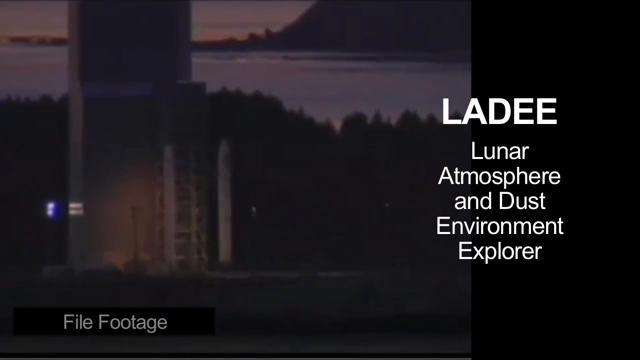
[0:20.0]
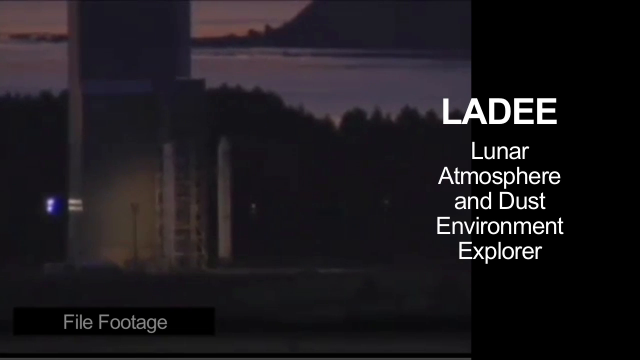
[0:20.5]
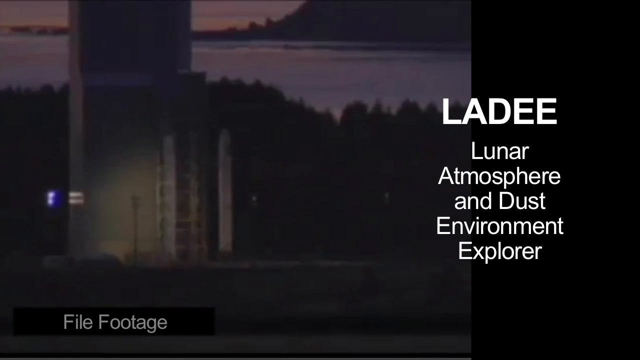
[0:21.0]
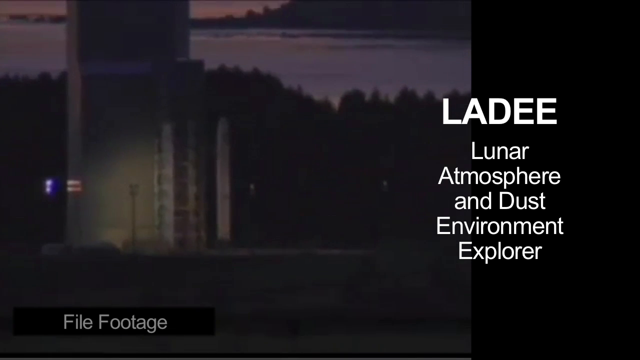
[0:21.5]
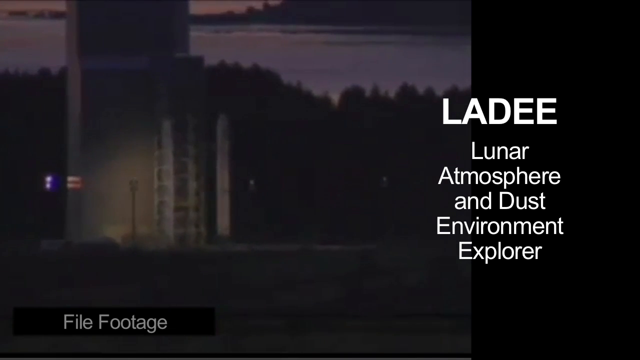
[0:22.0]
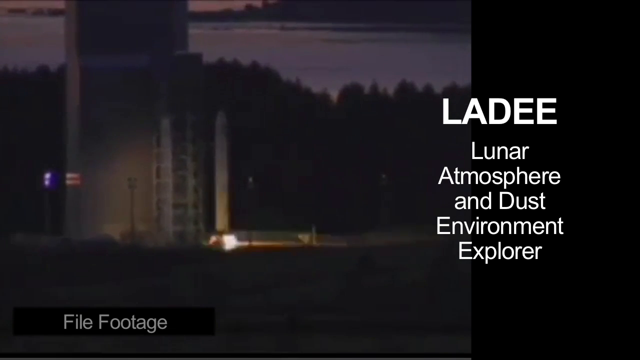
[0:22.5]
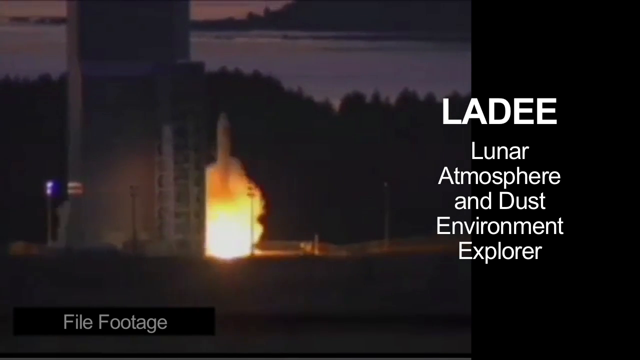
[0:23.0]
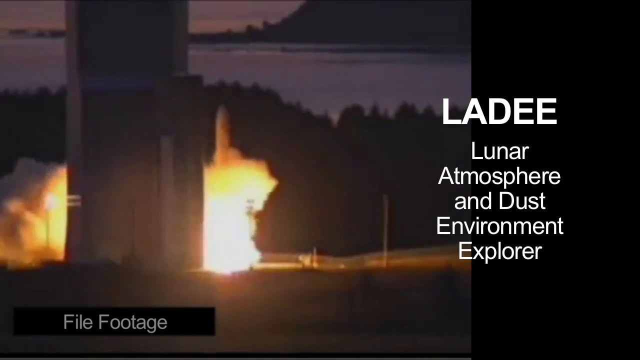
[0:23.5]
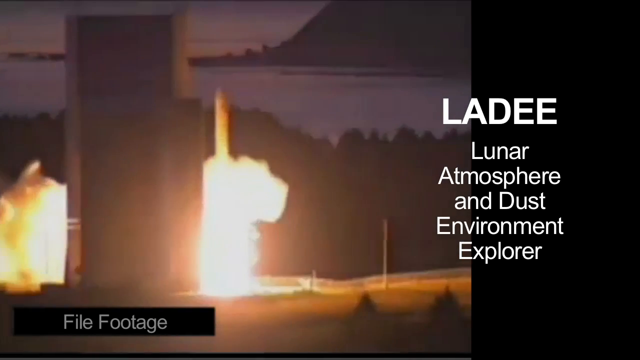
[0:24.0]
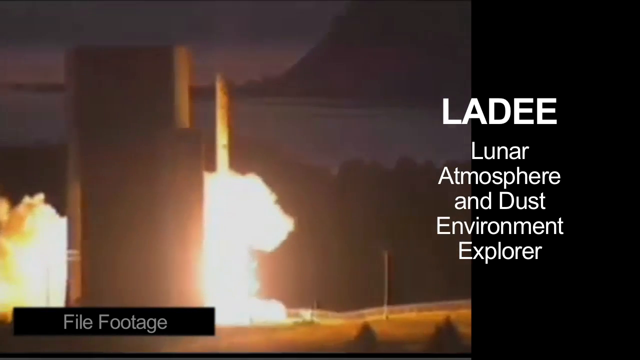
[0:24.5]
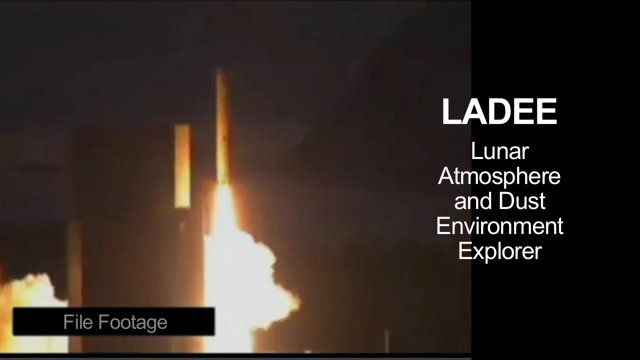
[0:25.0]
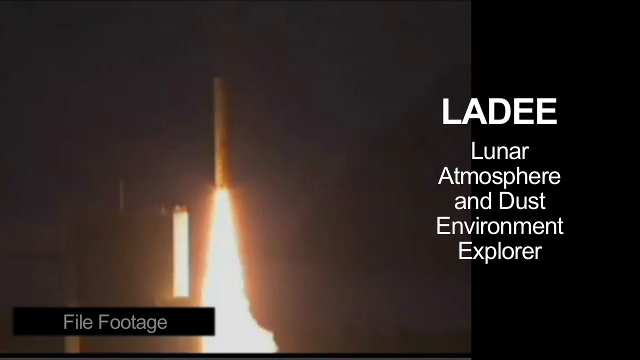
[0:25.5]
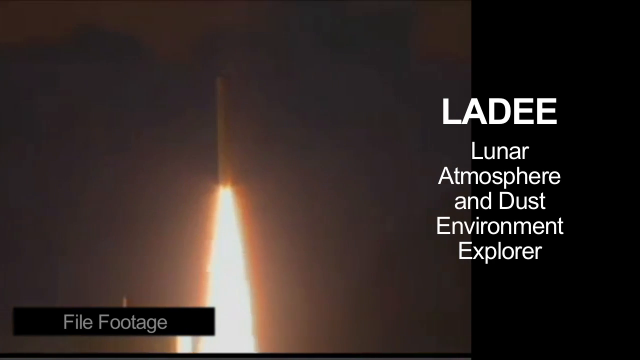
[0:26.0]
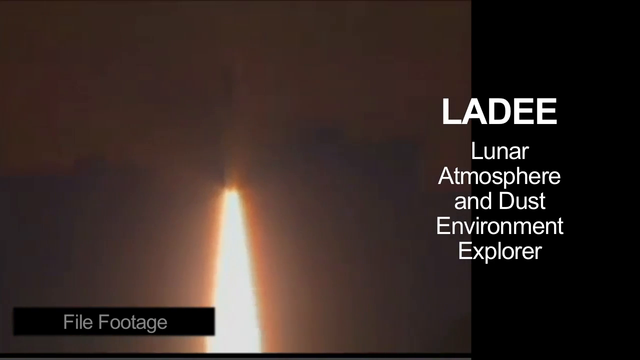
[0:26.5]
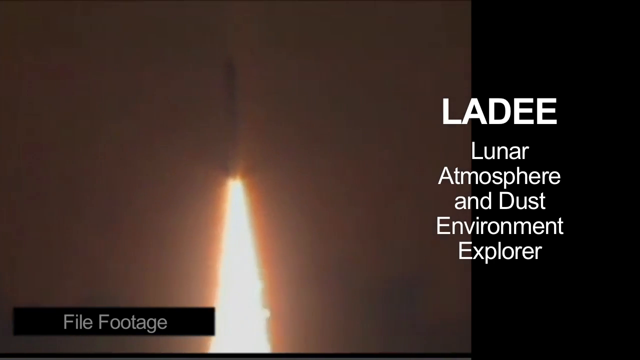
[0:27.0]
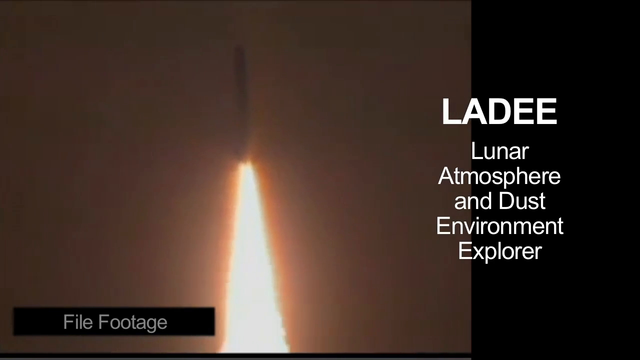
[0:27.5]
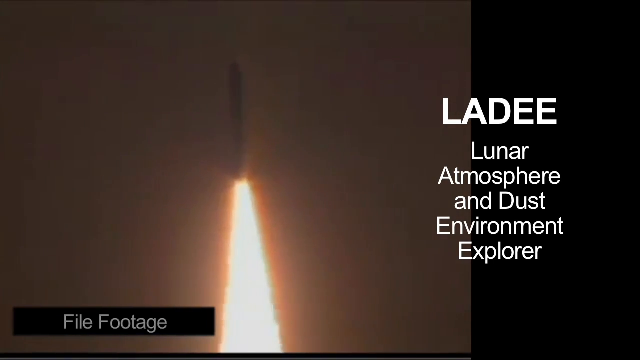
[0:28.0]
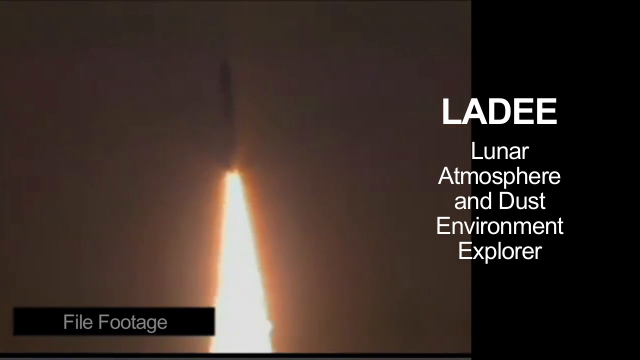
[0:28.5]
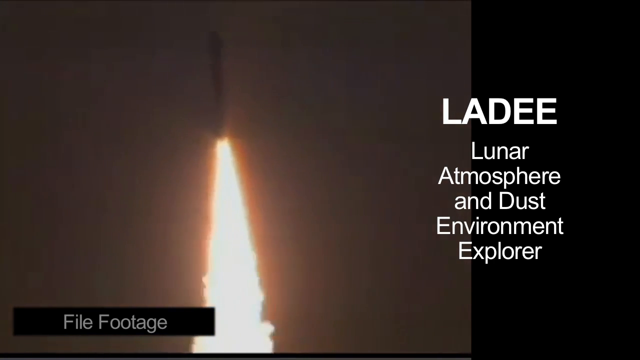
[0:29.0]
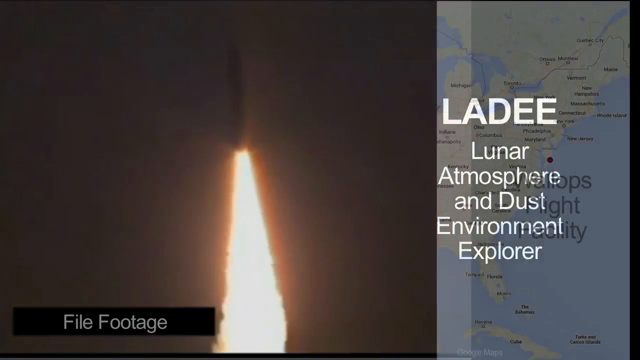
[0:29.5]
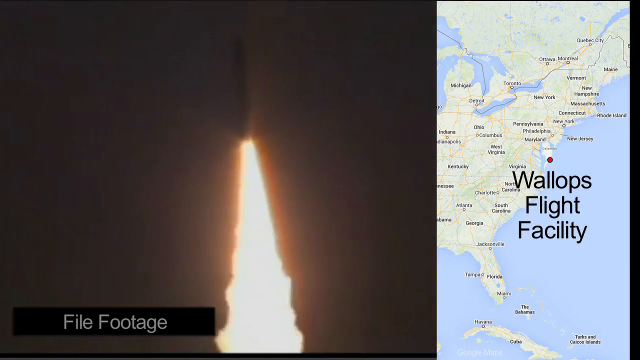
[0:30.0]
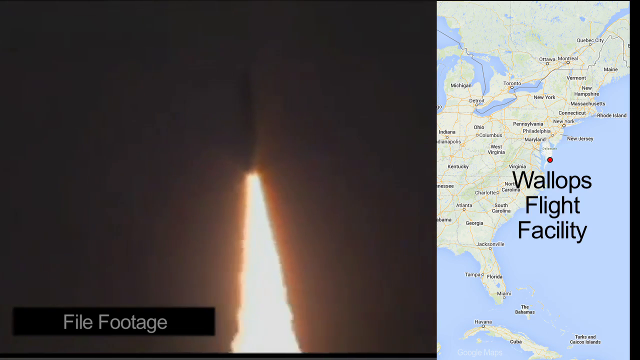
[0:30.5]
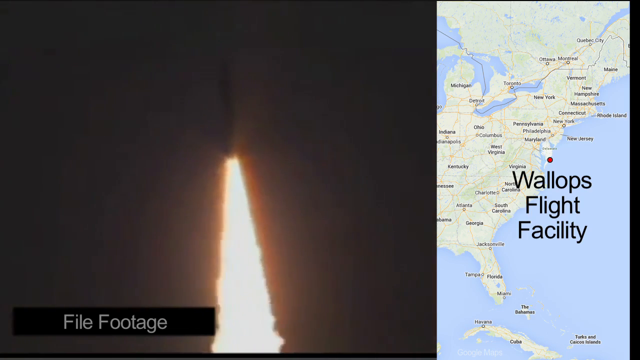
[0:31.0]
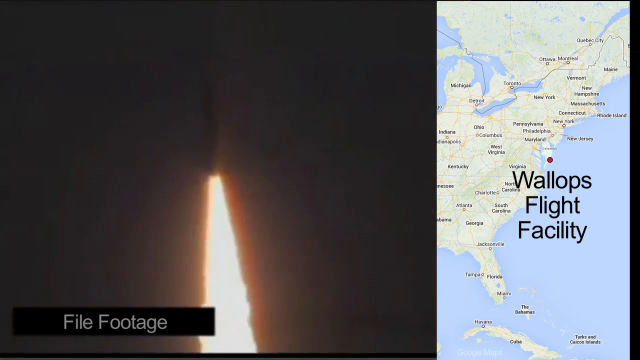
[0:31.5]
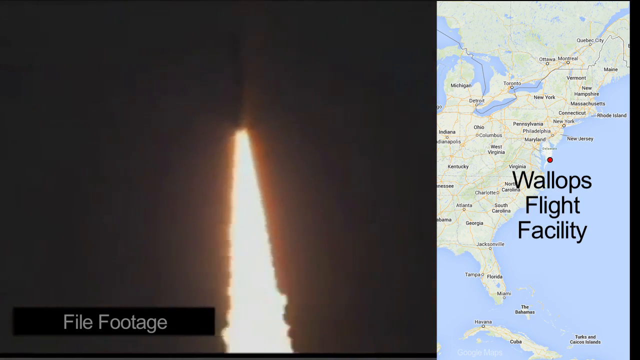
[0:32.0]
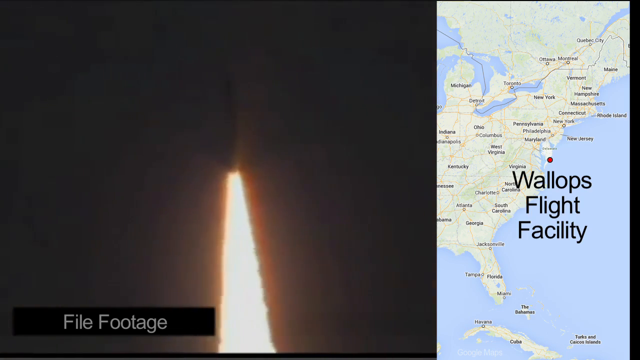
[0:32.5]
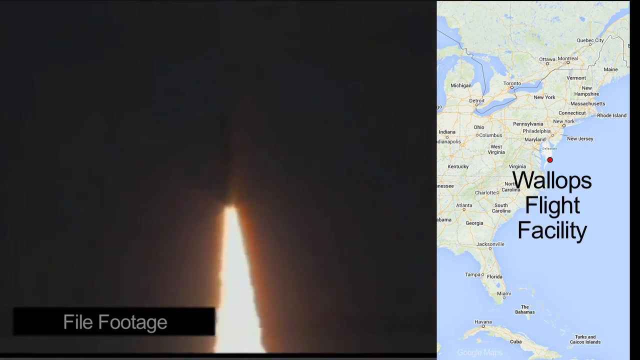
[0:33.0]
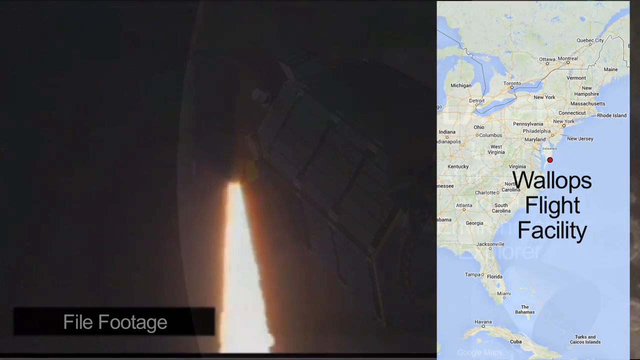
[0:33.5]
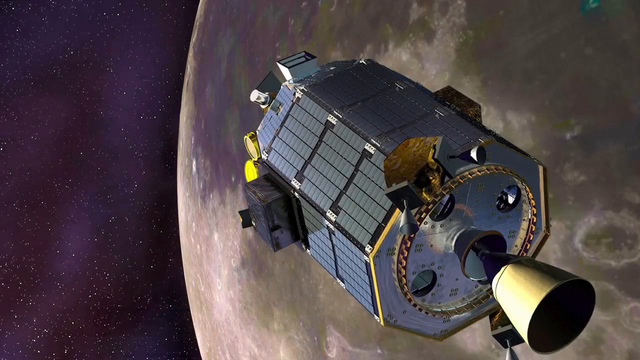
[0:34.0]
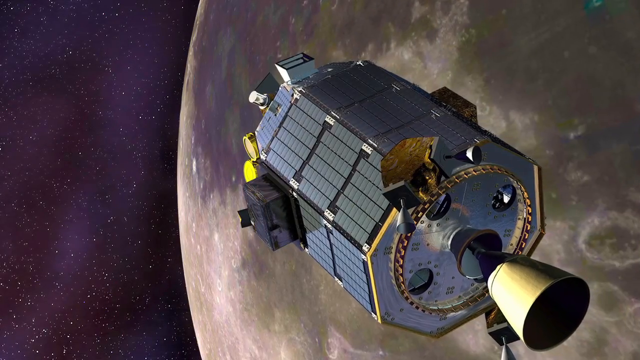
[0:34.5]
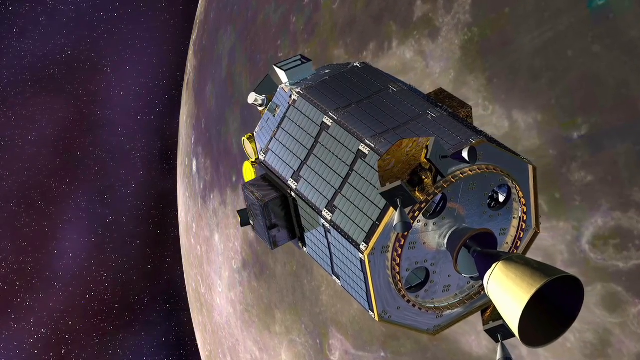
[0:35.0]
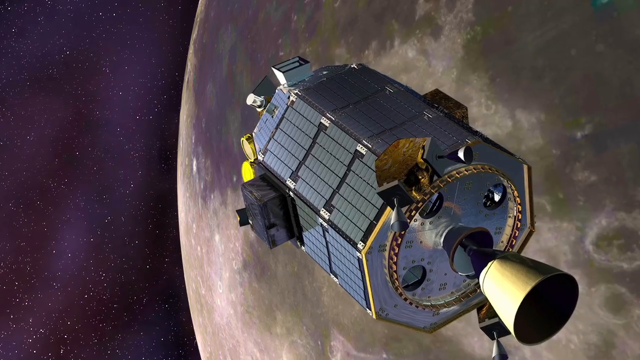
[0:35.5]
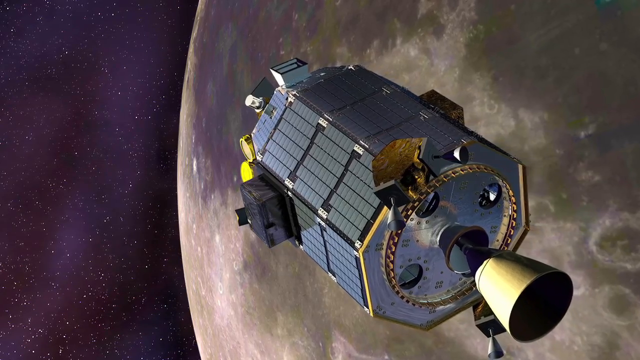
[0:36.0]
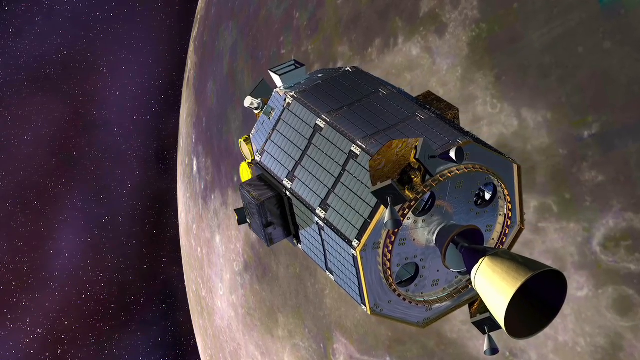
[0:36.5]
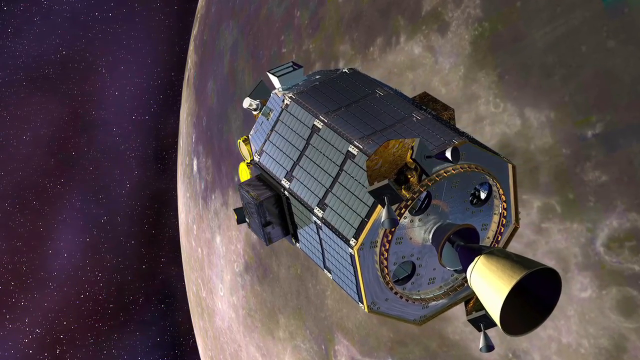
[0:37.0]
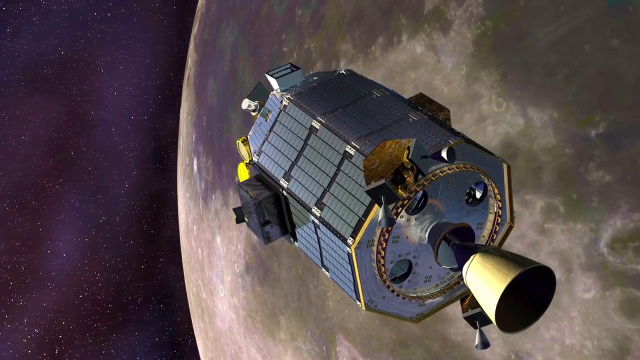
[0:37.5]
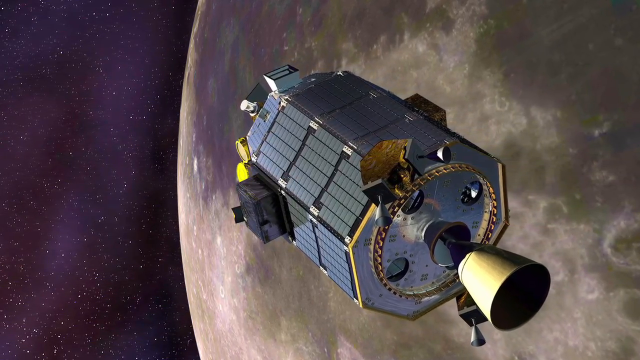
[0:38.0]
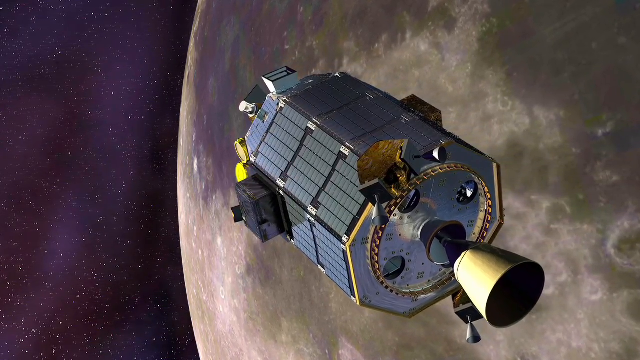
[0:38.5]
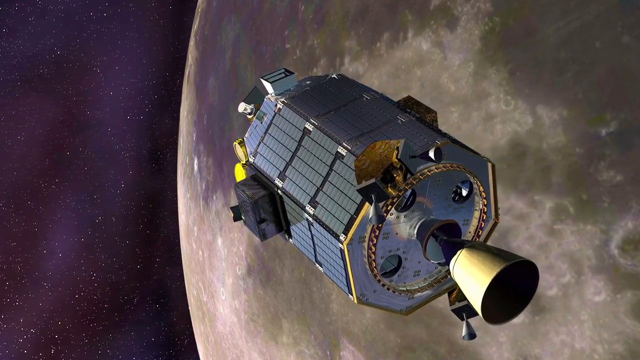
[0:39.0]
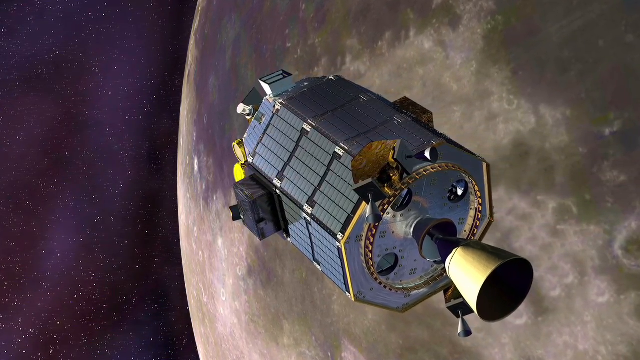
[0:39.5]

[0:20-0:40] Text reads "LADEE, lunar atmosphere and dust environment explorer". What looks like a launch pad with a rocket appears in file footage, and the rocket goes up into the atmosphere, with text saying it is at the Wallops Flight Facility. A computer-generated capsule that came off the rocket is then shown floating around the Earth.